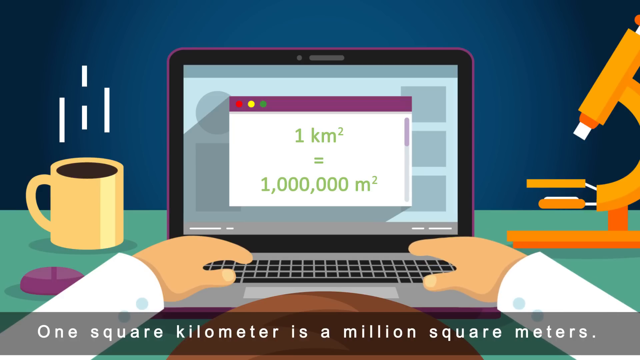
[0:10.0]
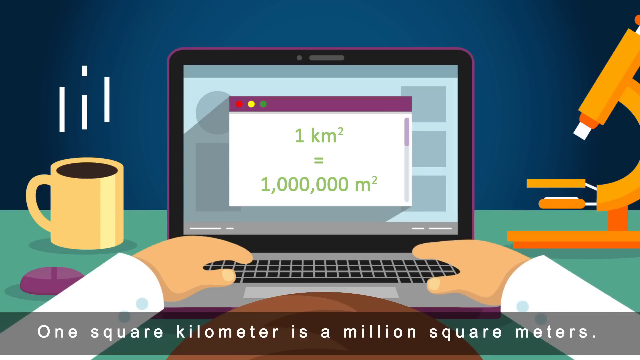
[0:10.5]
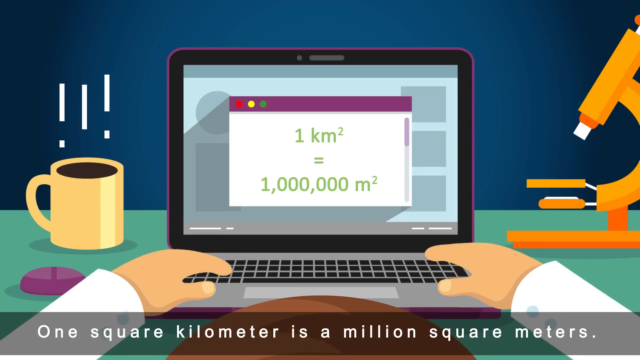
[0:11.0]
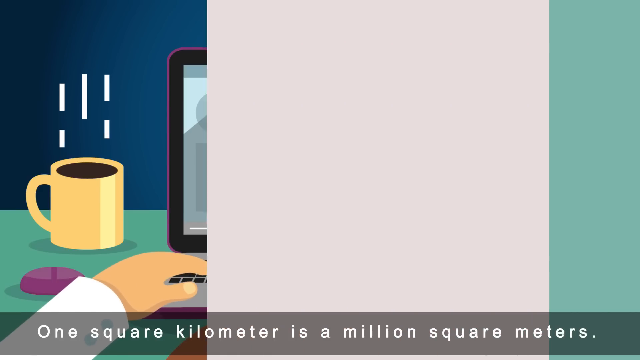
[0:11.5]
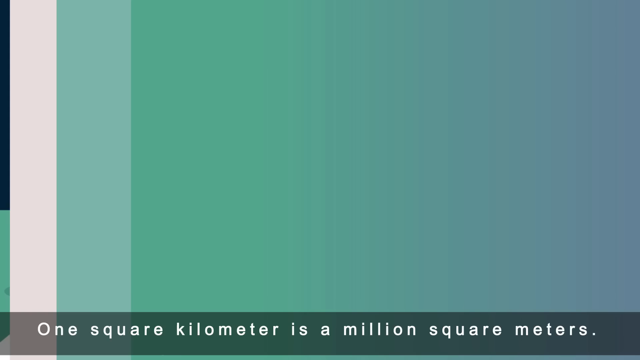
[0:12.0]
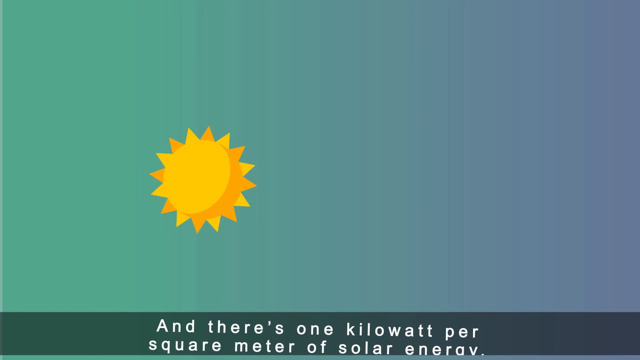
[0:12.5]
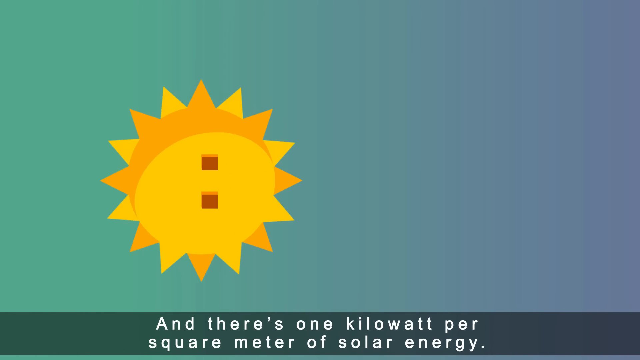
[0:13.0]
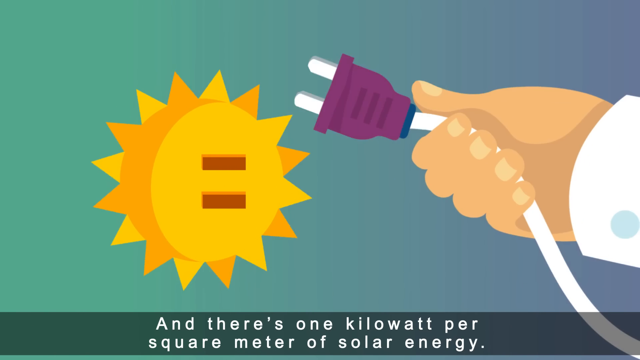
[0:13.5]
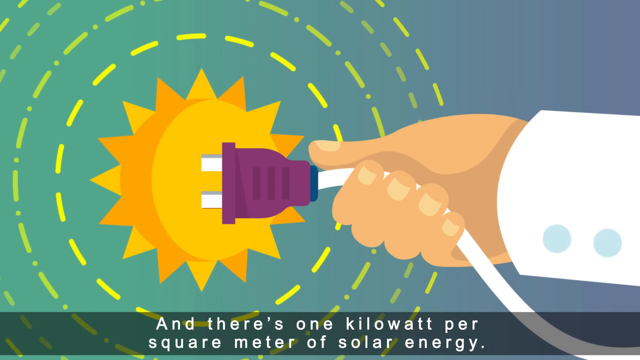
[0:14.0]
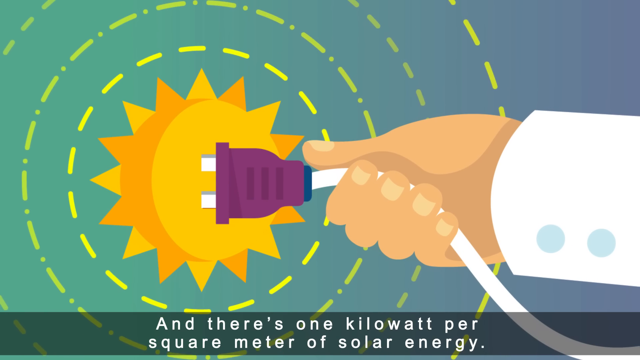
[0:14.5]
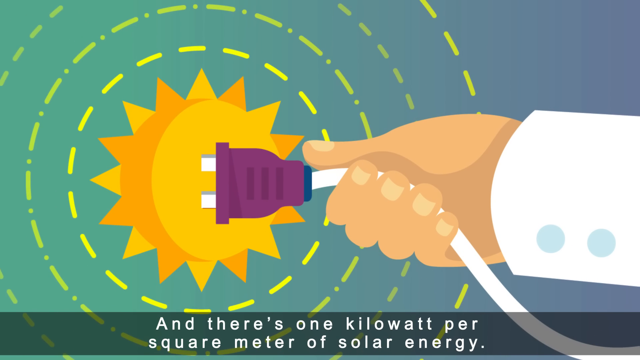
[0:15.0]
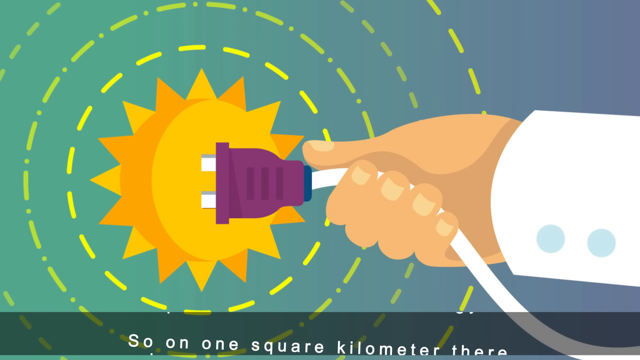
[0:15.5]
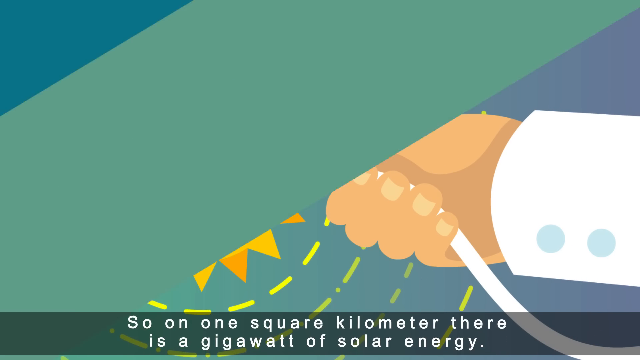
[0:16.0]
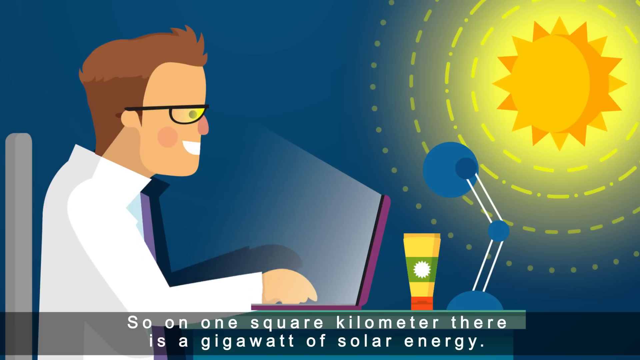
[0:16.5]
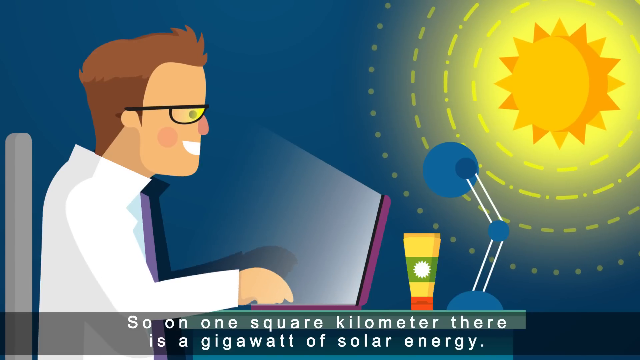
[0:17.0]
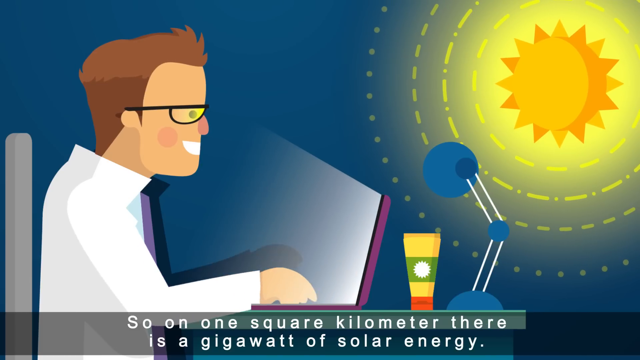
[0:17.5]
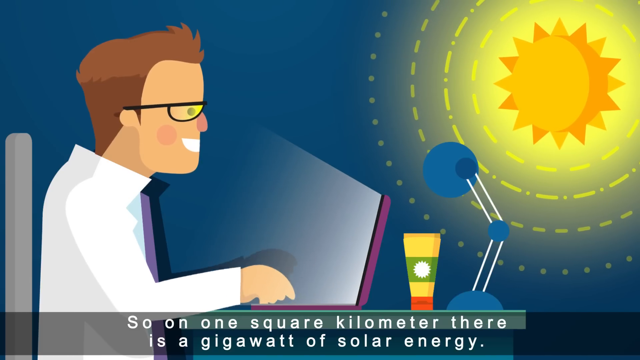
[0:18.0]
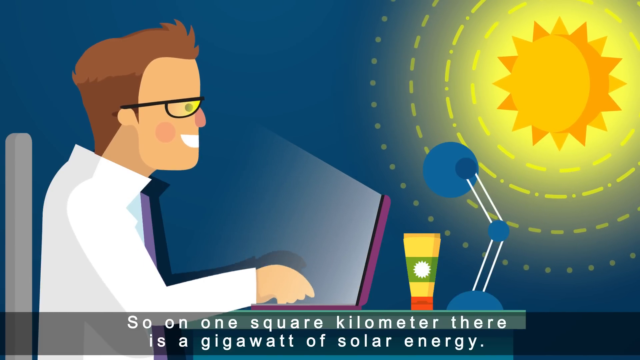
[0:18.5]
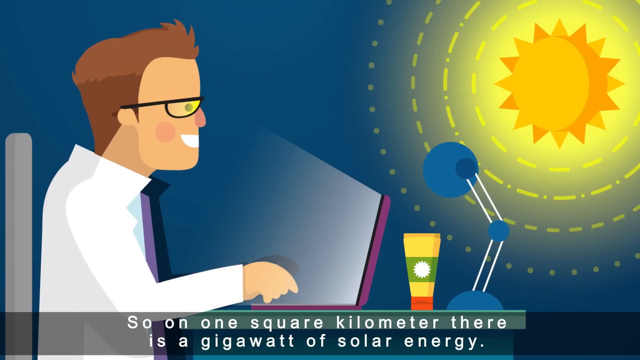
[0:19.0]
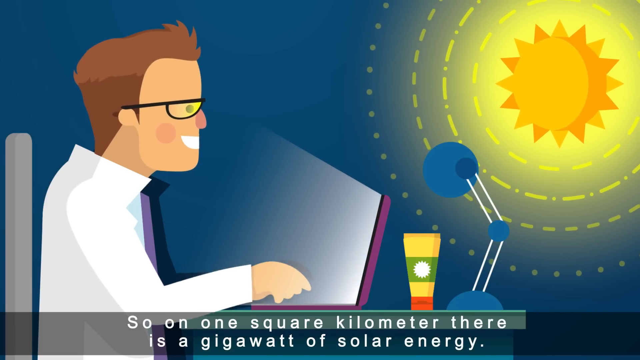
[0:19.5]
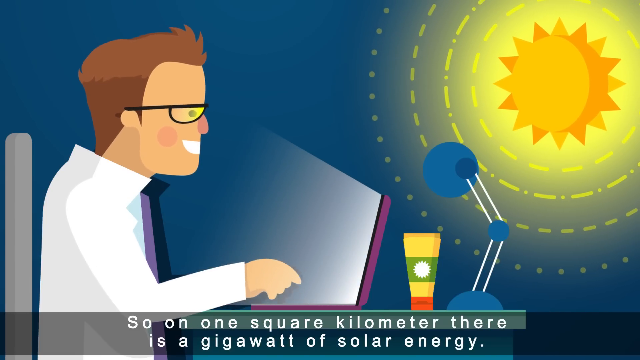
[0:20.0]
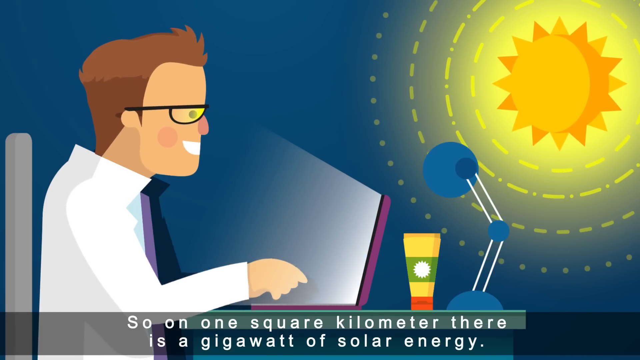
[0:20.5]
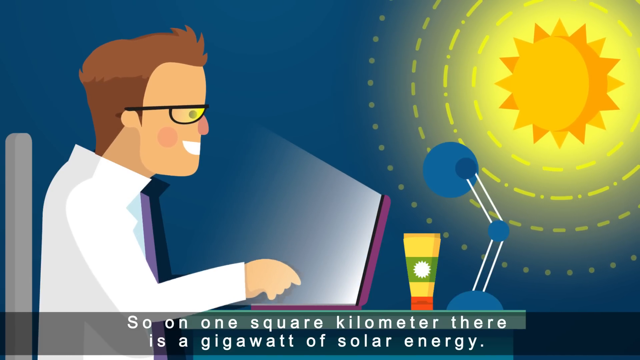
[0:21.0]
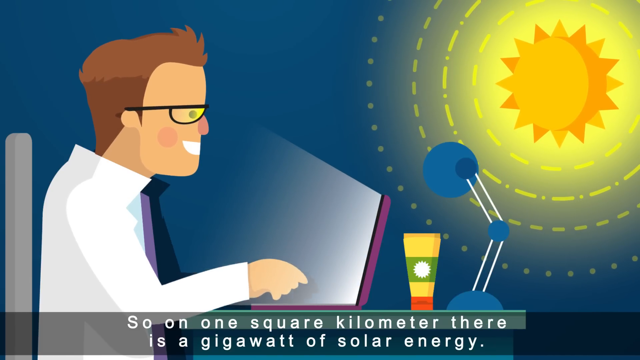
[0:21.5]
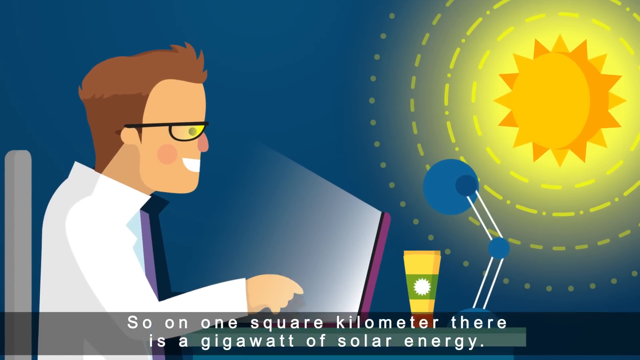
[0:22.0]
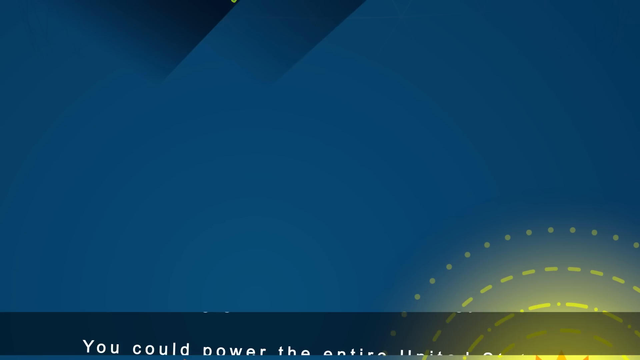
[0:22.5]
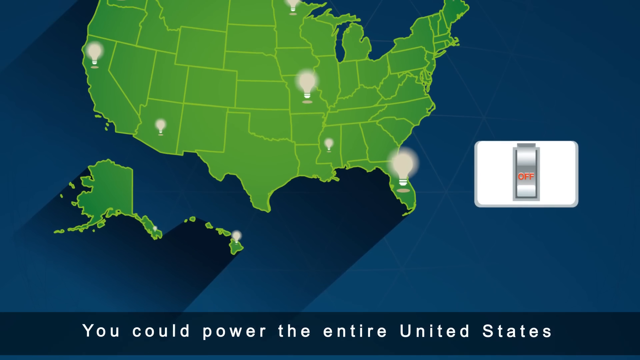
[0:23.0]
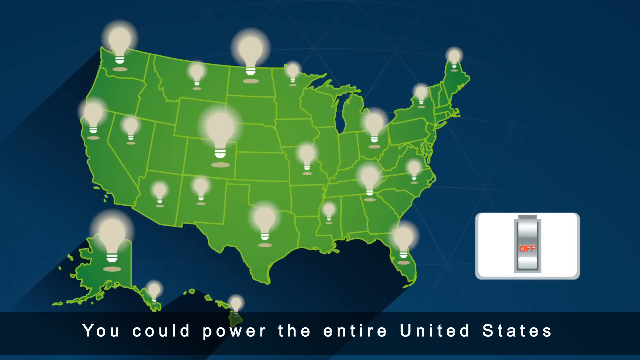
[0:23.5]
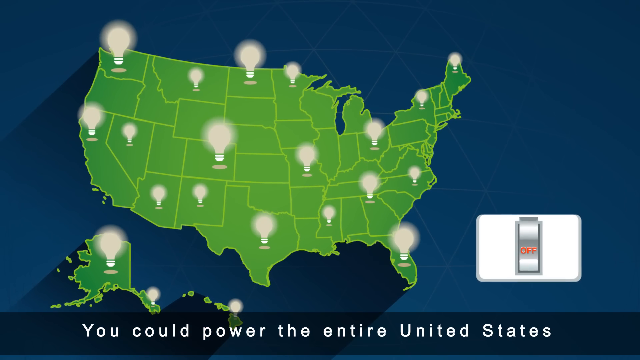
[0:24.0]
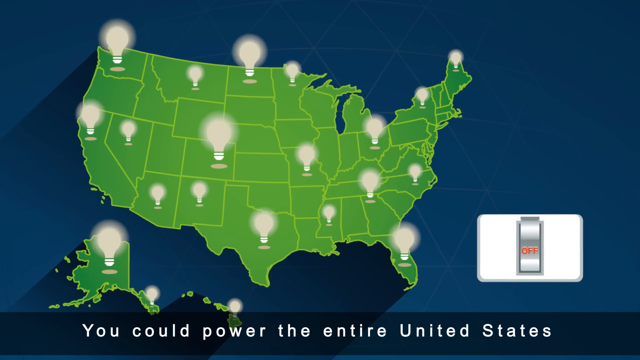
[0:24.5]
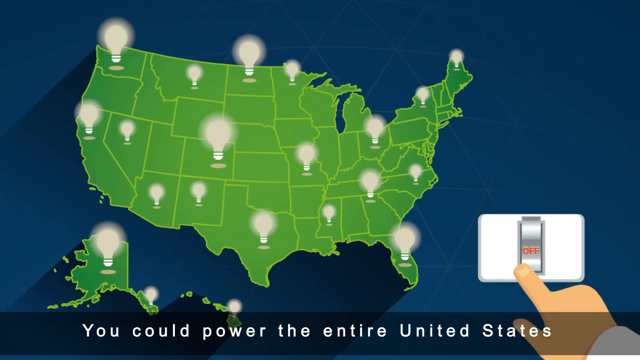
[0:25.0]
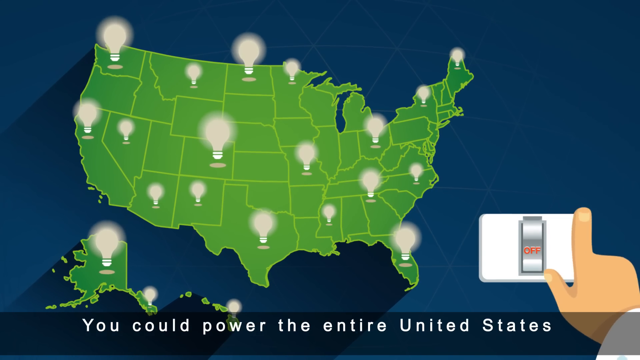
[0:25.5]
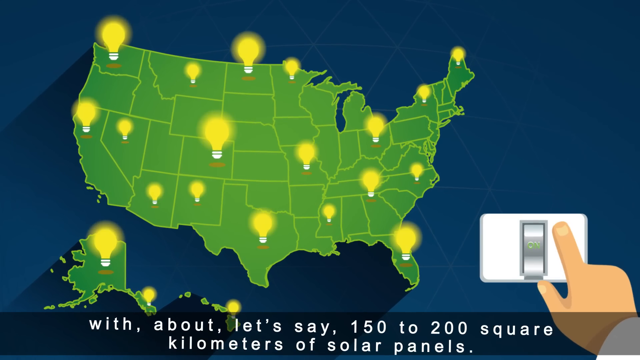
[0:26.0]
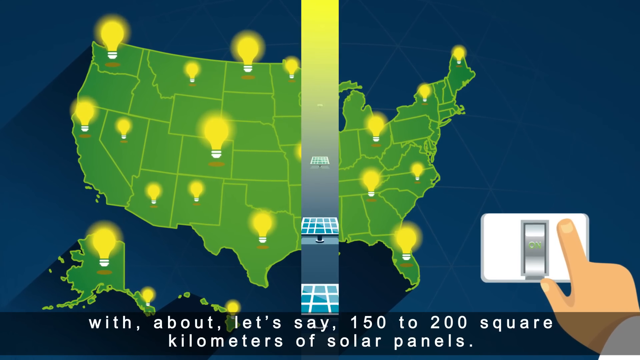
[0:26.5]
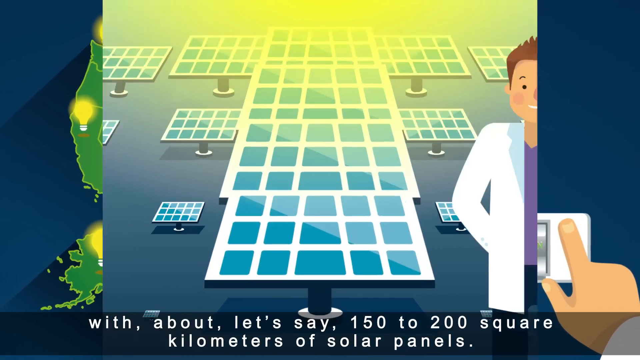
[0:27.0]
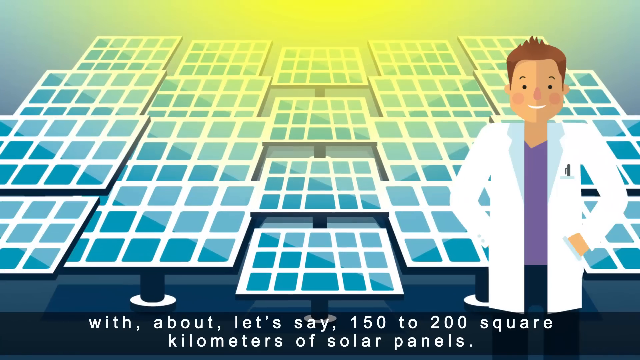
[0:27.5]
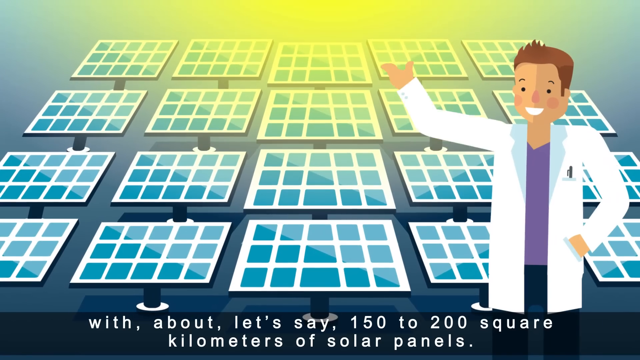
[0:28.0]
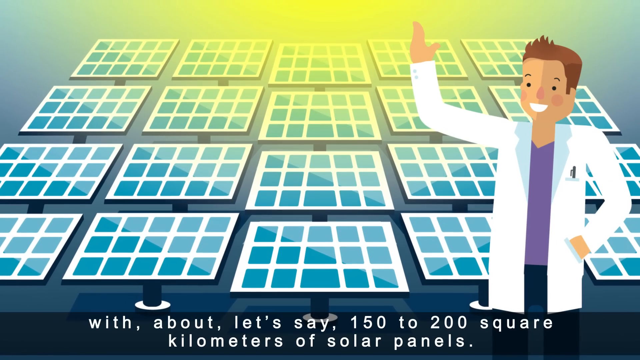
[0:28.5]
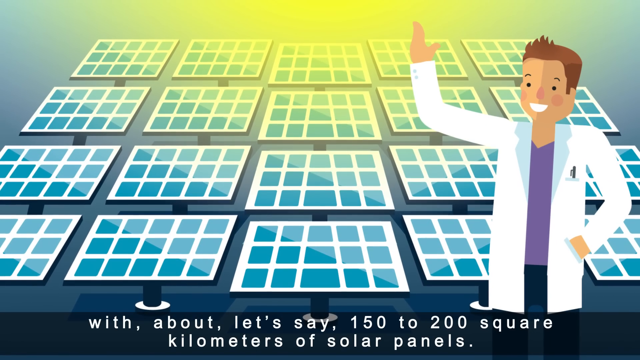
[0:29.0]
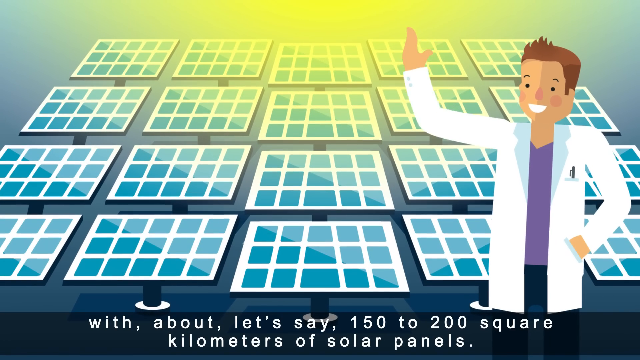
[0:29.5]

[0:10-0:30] The scene is now shown from a different view, where the screen of the computer is visible; it is a laptop. The person using the computer has their hands on the keys, with their fingers touching the keys, and wears a long-sleeve white jacket. An orange microscope is sitting on top of the desk on the right side of the frame, and a yellow cup of steaming hot coffee is sitting on top of the desk on the left side. The walls in the room are navy blue. On the laptop screen, a page is pulled up that is purple across the top and white on the rest of the page. In the purple area across the top of the screen there are a red circle, a yellow circle, and a green circle.